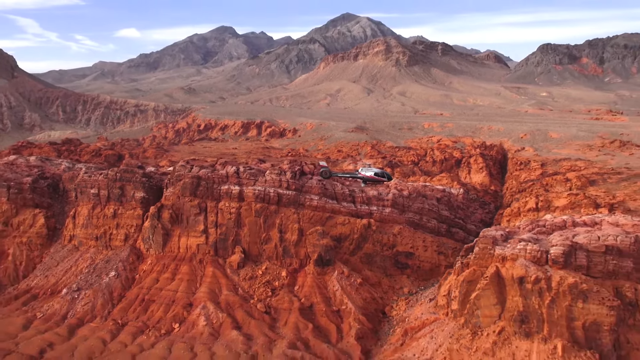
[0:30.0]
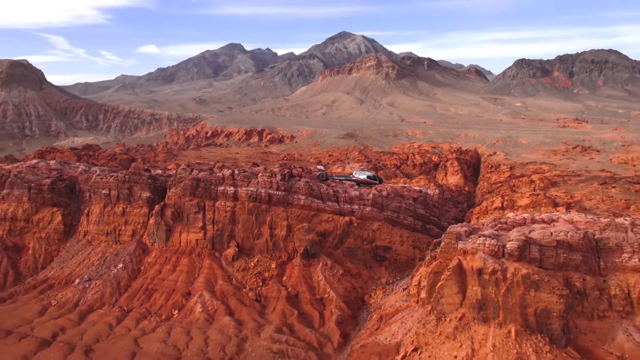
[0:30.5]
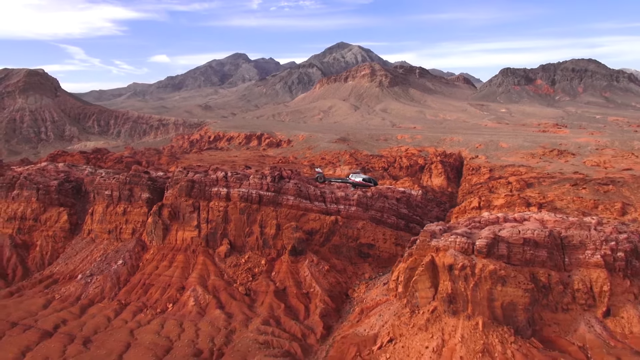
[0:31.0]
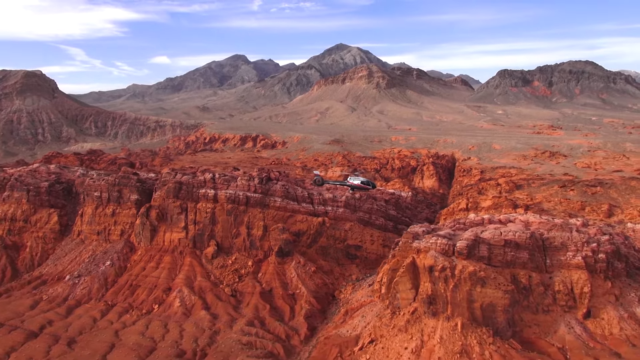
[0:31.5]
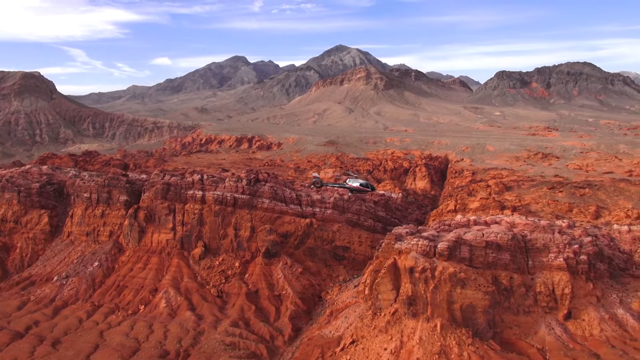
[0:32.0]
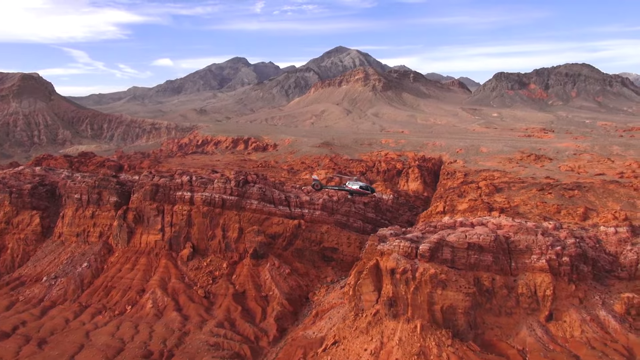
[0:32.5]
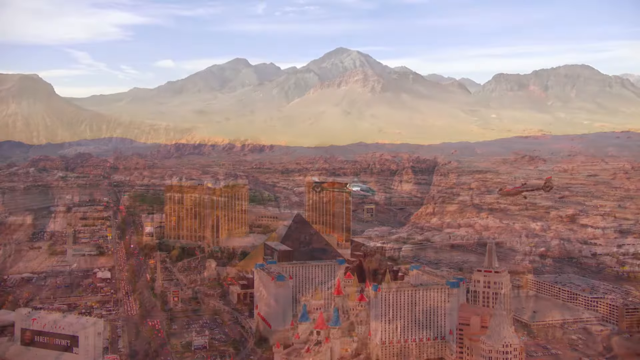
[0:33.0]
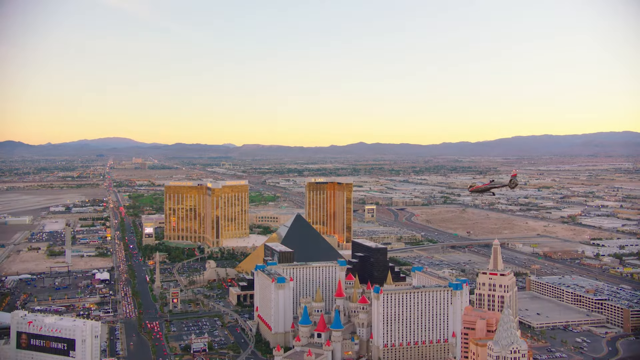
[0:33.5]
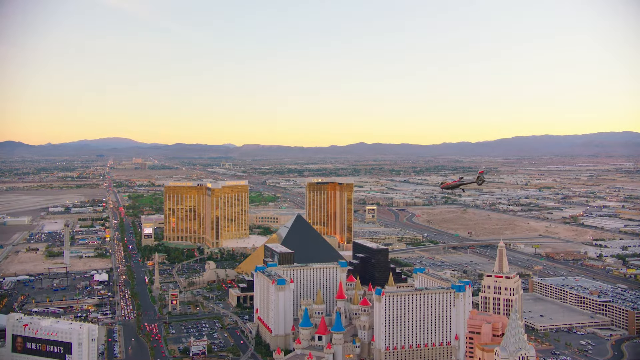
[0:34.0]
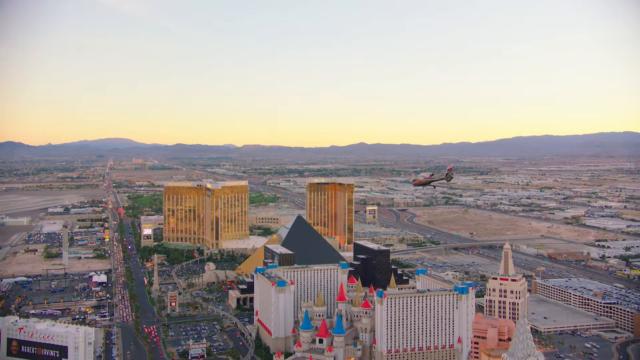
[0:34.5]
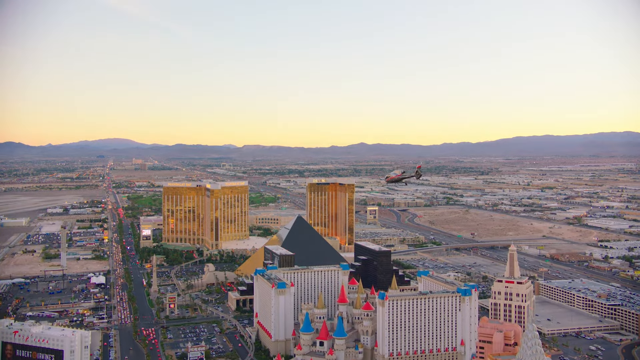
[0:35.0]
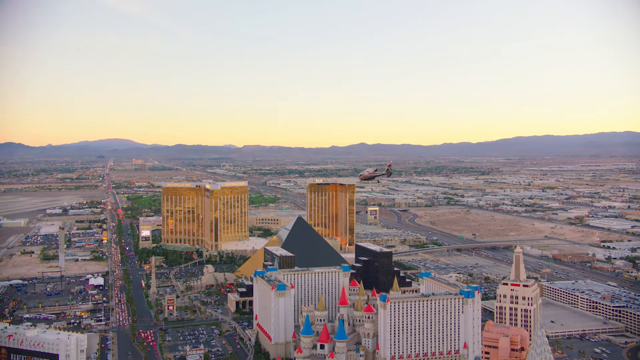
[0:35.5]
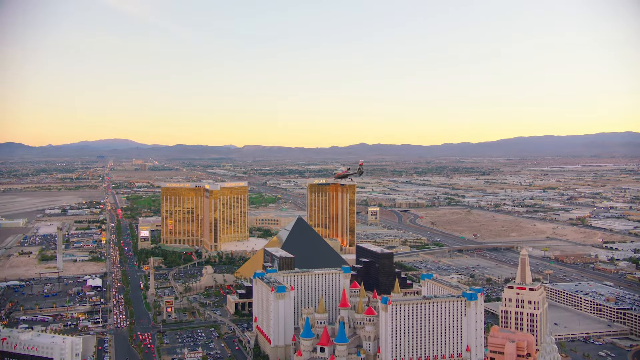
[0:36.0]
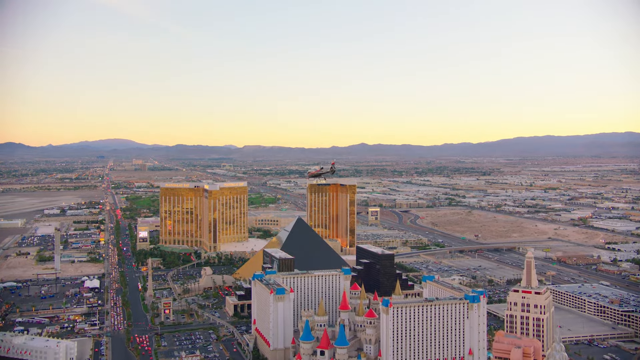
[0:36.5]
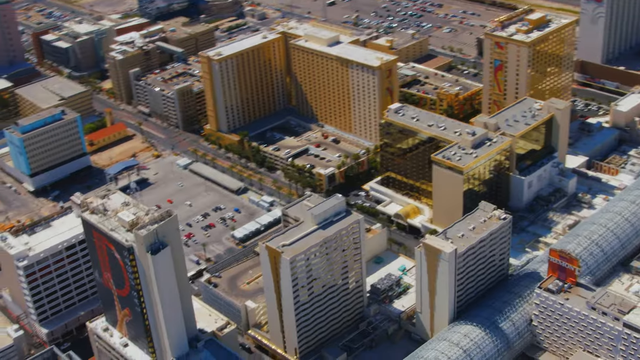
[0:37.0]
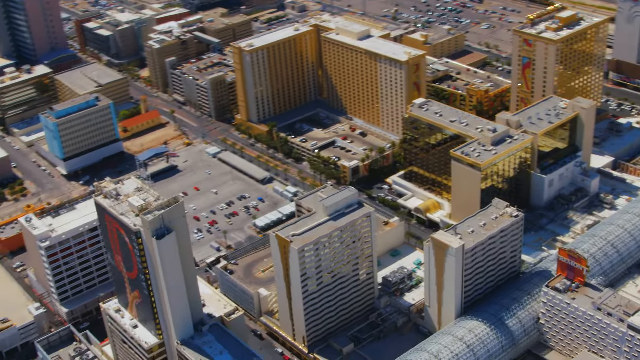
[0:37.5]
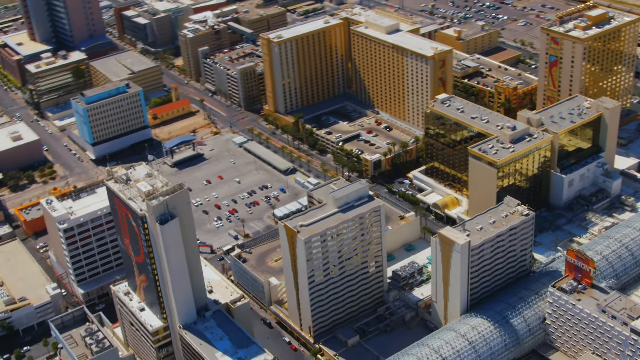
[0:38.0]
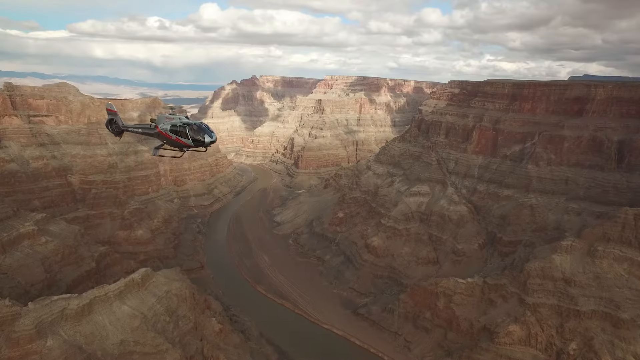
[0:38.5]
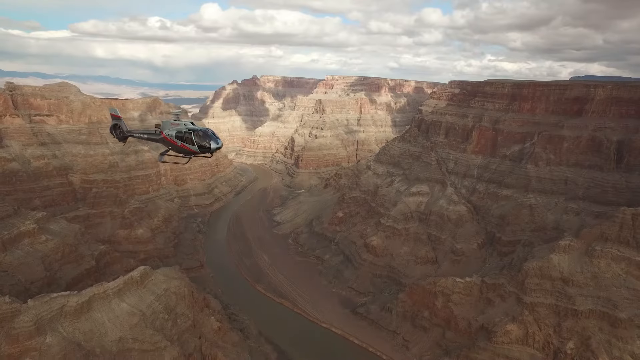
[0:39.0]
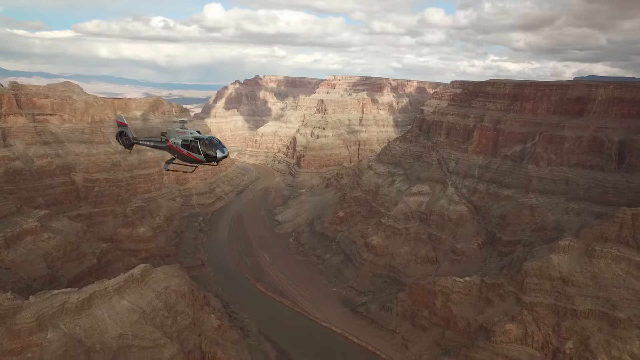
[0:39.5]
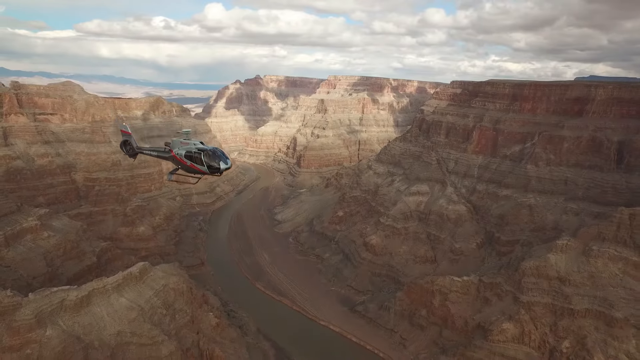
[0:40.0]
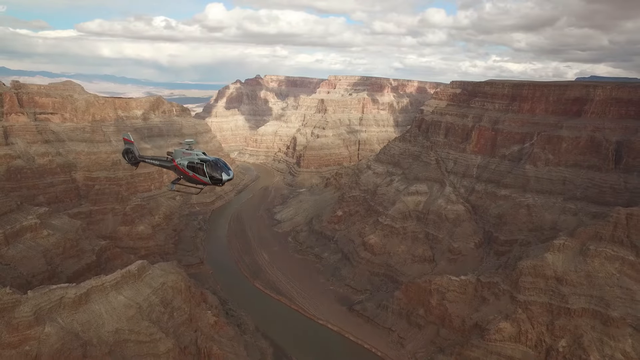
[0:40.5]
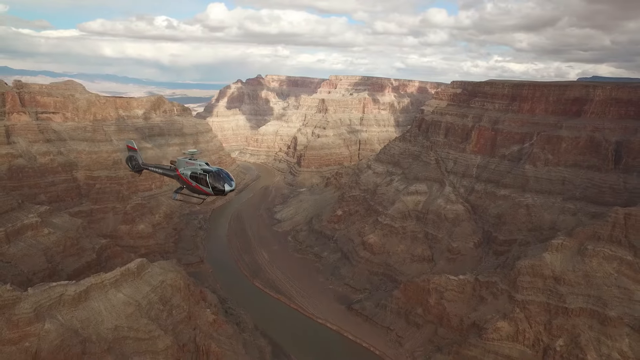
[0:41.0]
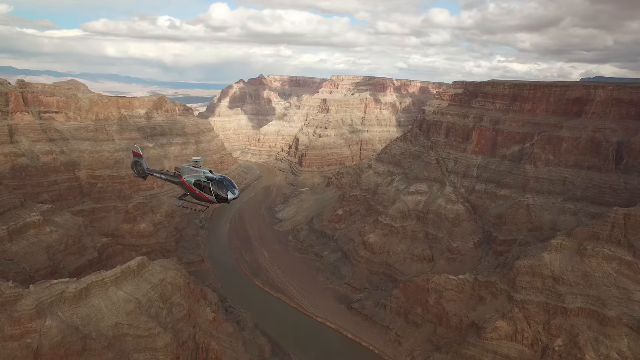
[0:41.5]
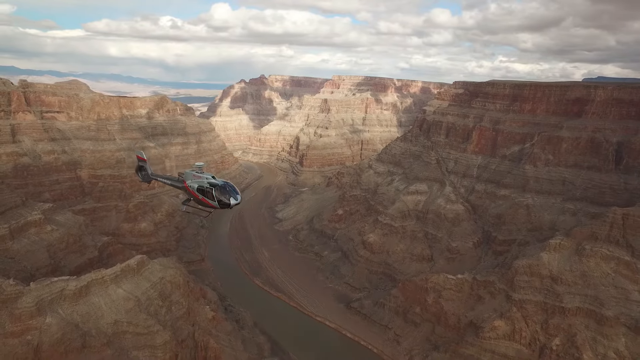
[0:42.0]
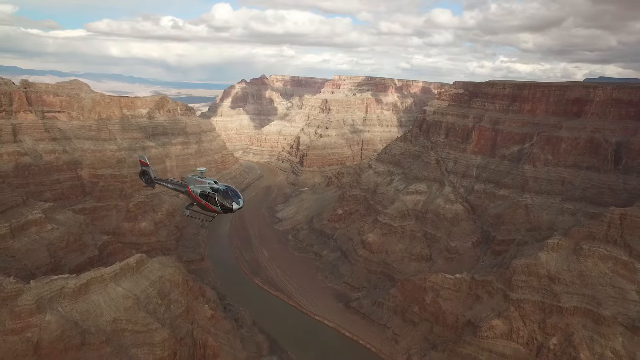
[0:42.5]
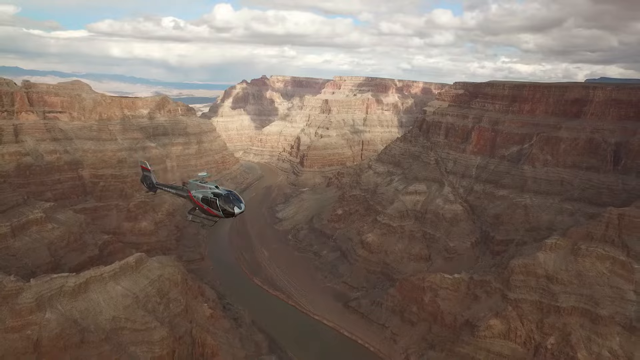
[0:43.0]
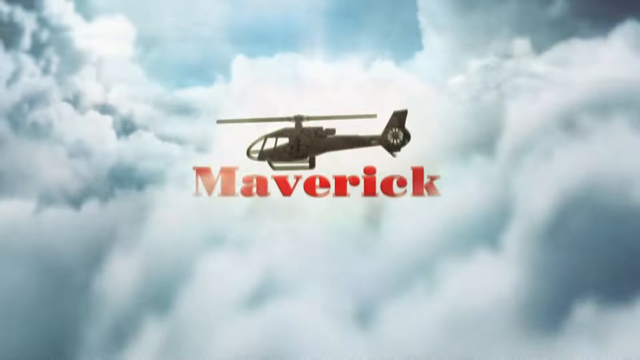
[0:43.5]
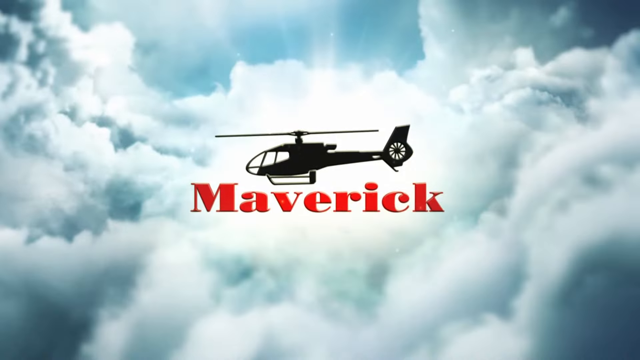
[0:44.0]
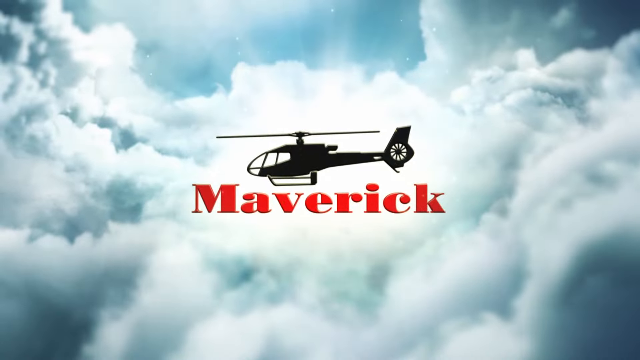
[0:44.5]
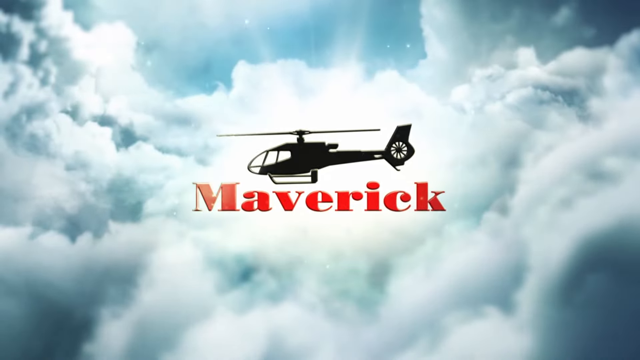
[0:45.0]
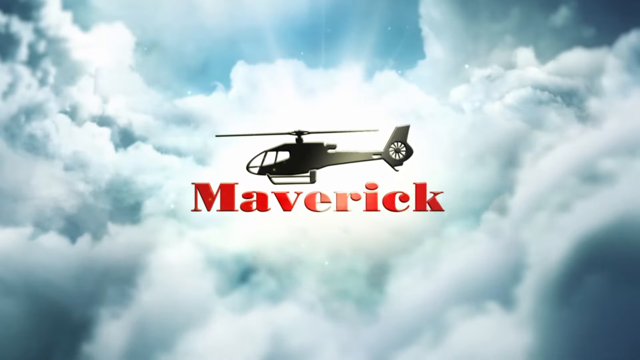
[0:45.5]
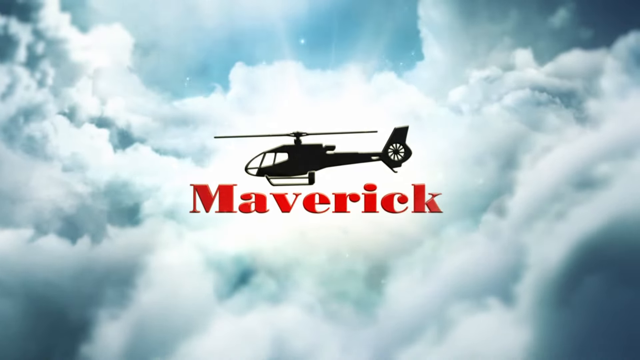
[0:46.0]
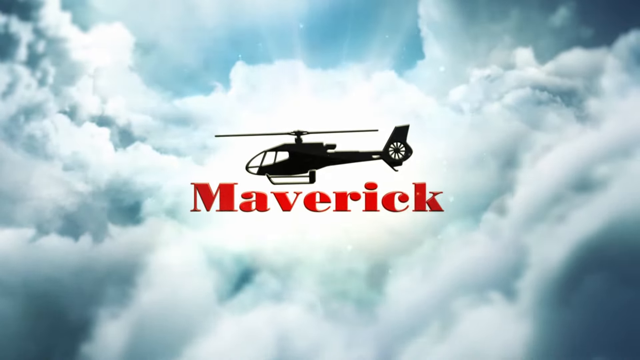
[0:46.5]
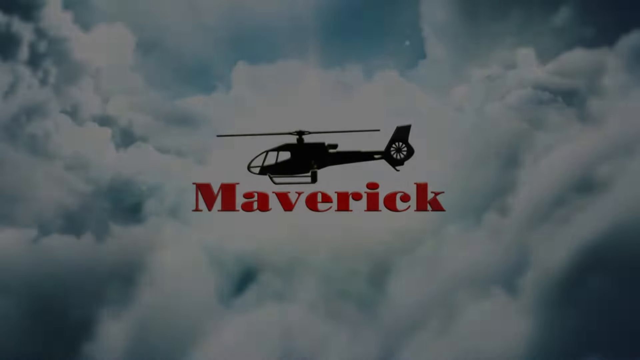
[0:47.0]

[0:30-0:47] The helicopter continues its tour of the canyon, with the bright, very reddish color visible along the flight. The video cuts to the helicopter swooping over the Las Vegas Strip, where many buildings, casinos, hotels and the street are clustered together, with tall buildings and crowded areas. It then switches back to a canyon, probably the Grand Canyon, with its river, the Colorado River, and its geographical etchings. At the very end a title plate shows the helicopter company, Maverick: the emblem reads "Maverick" with a capital M followed by small letters in red, and above it is the silhouette of the helicopters. This sits on a background of a sky with clouds.